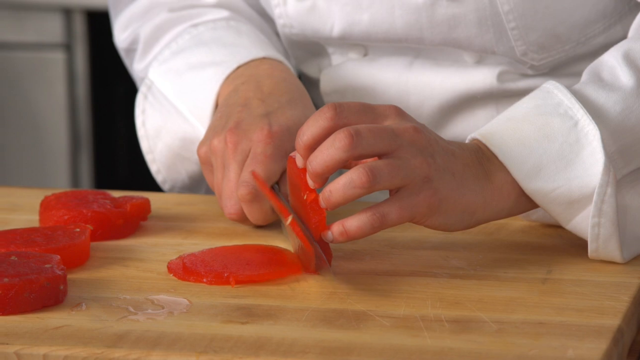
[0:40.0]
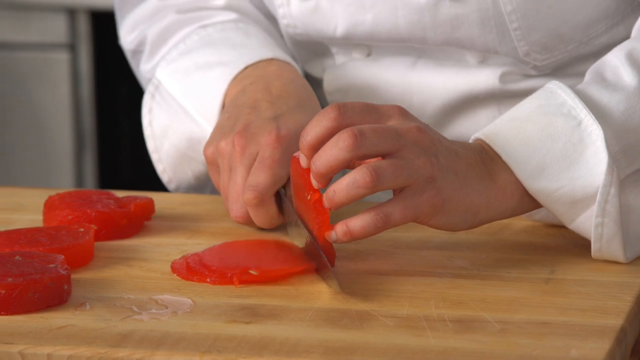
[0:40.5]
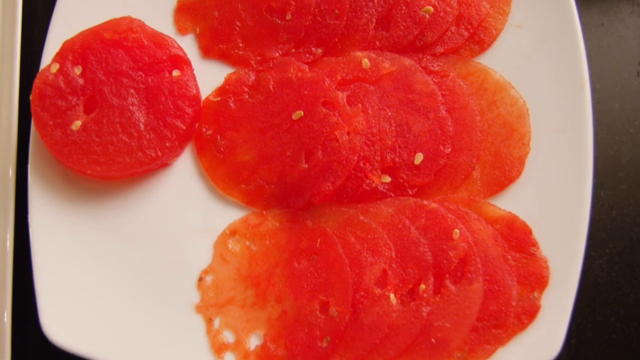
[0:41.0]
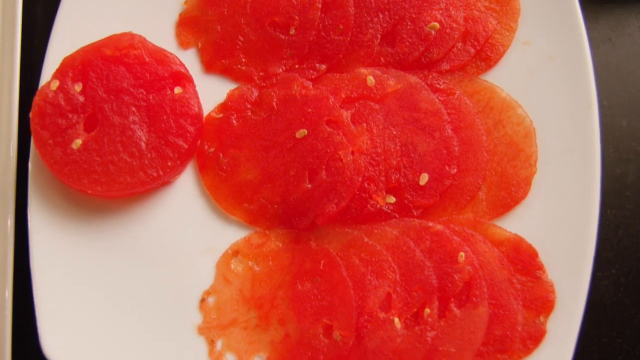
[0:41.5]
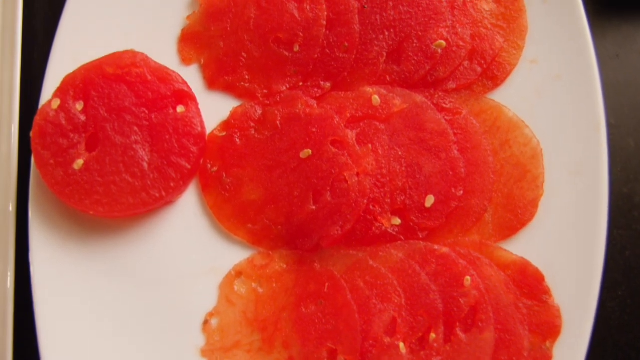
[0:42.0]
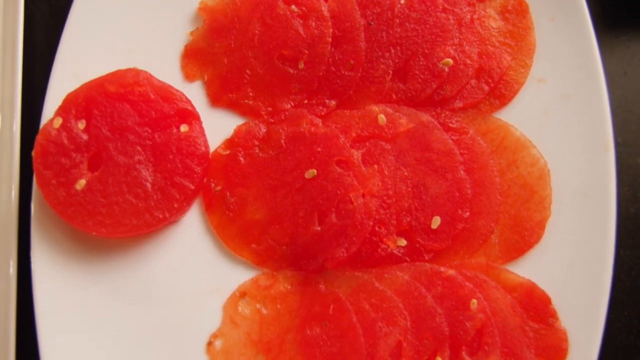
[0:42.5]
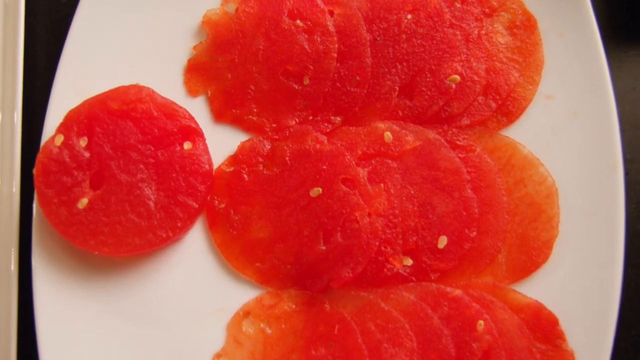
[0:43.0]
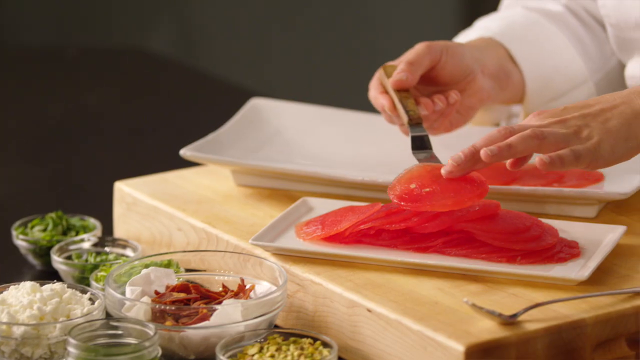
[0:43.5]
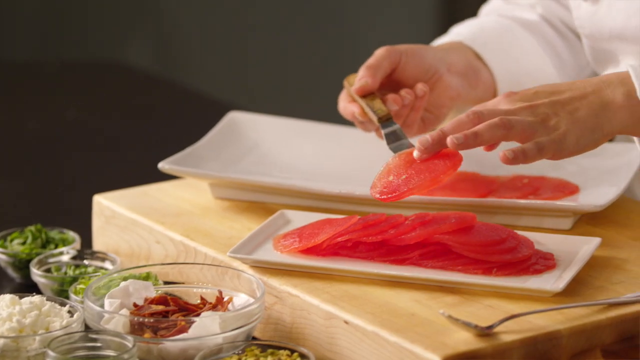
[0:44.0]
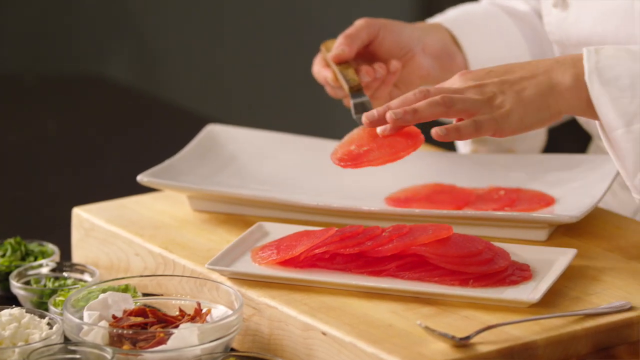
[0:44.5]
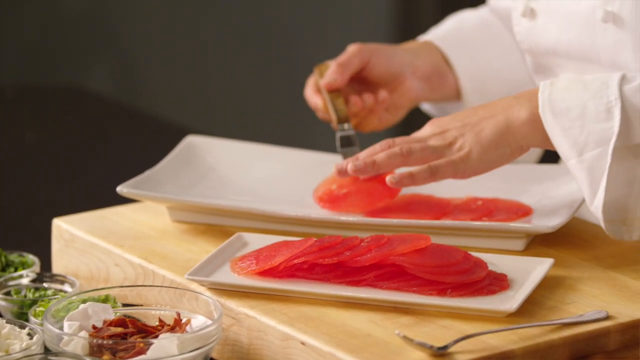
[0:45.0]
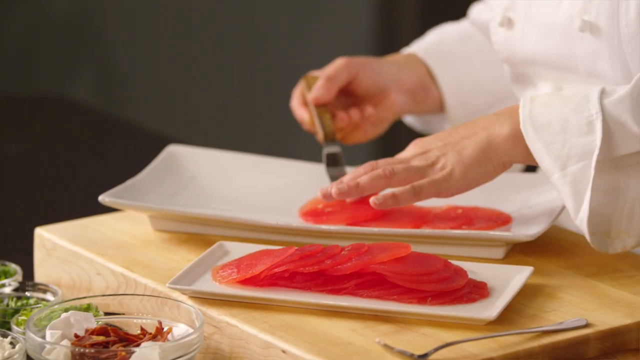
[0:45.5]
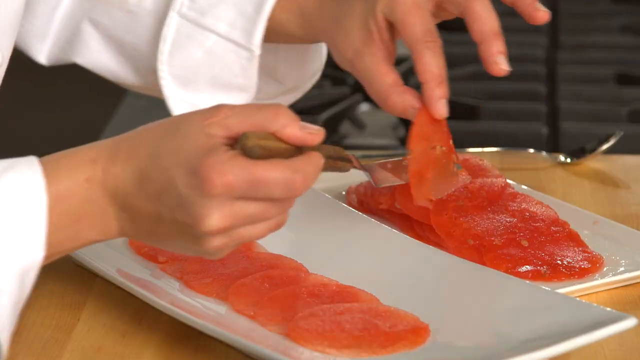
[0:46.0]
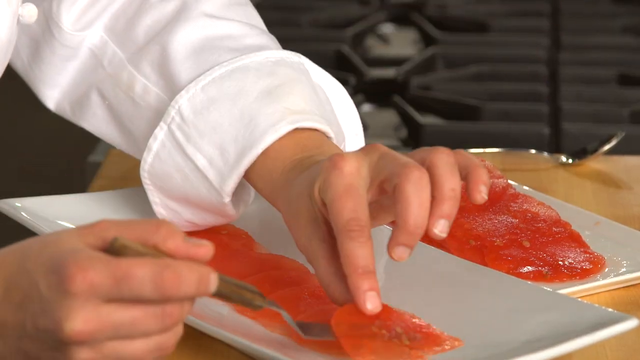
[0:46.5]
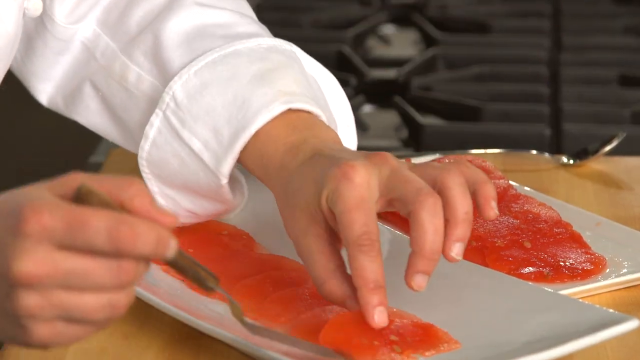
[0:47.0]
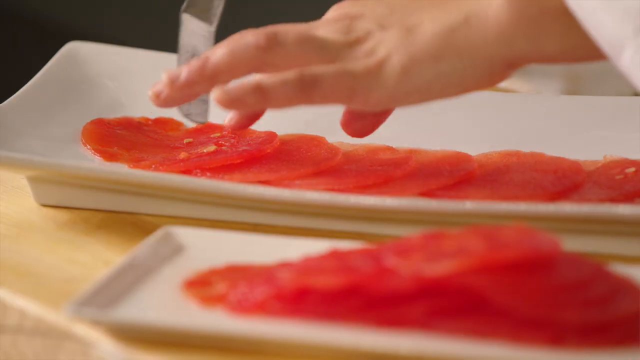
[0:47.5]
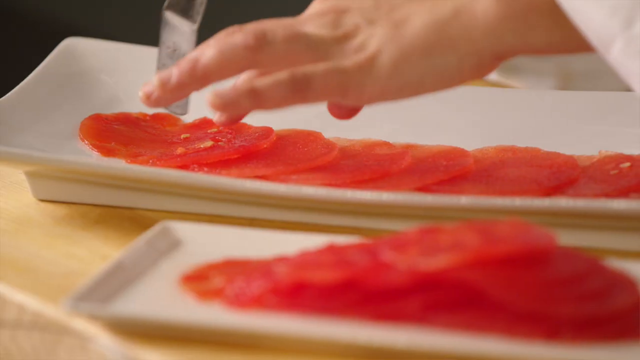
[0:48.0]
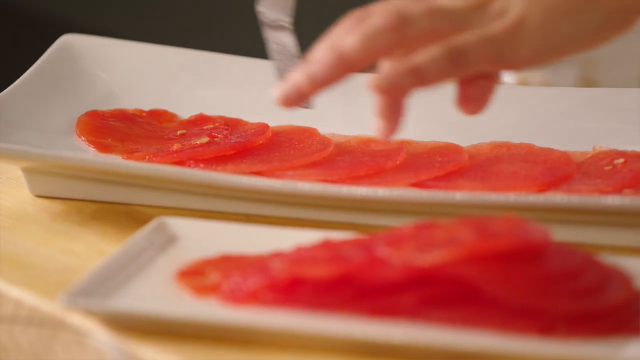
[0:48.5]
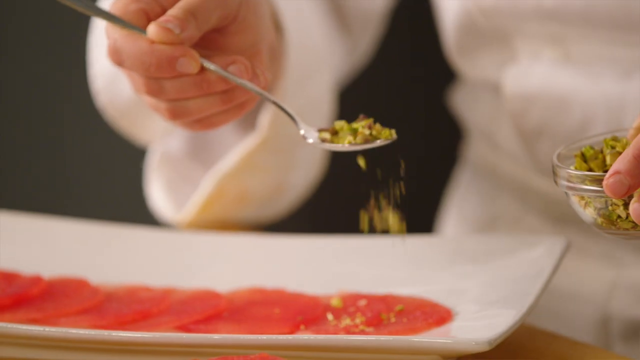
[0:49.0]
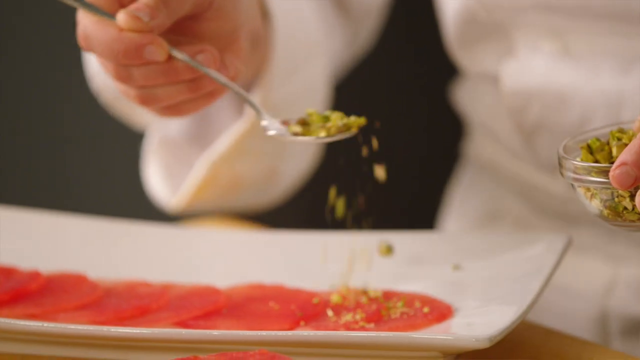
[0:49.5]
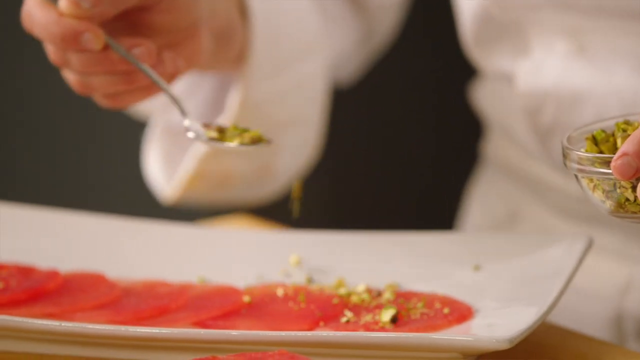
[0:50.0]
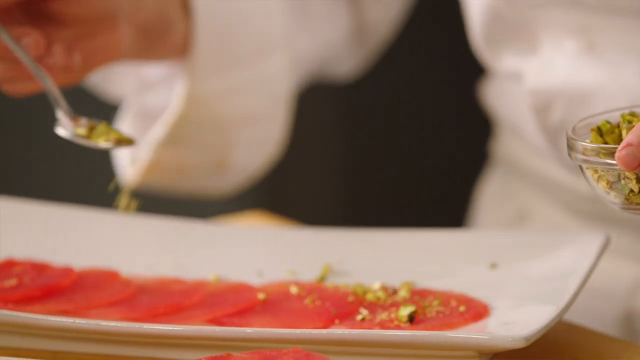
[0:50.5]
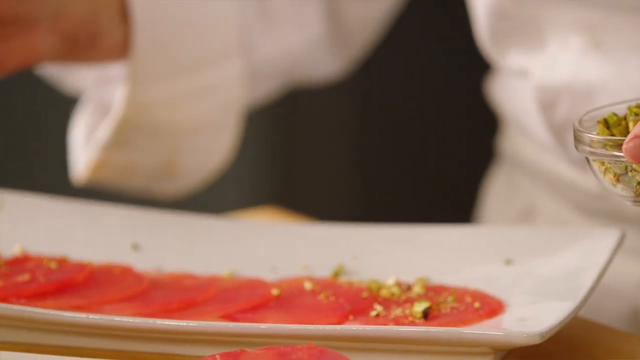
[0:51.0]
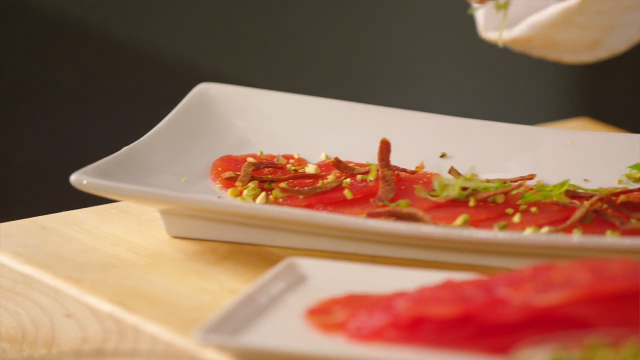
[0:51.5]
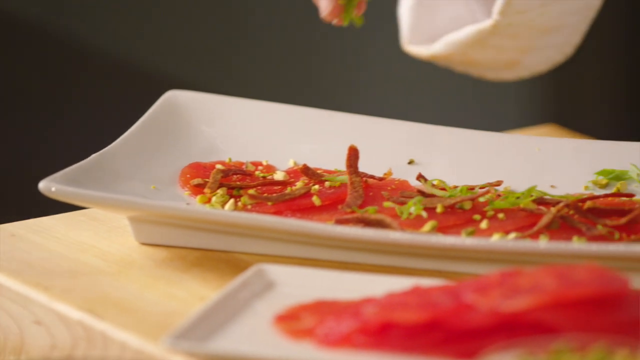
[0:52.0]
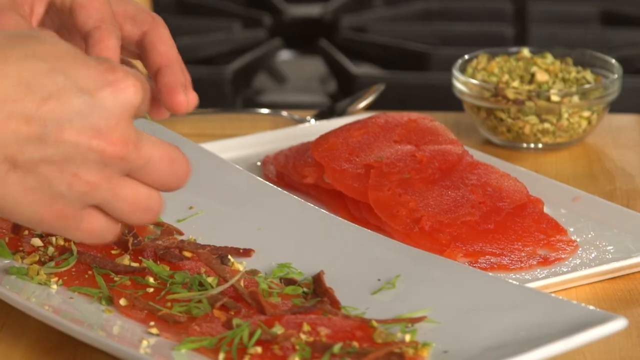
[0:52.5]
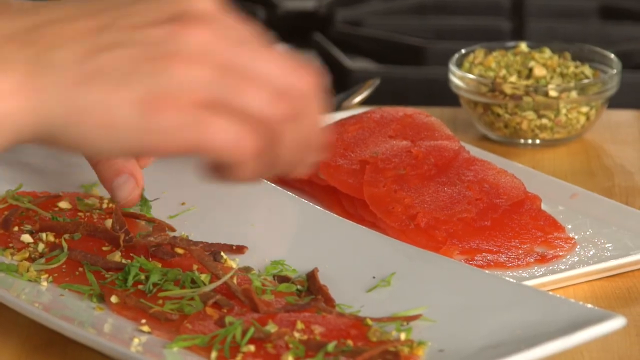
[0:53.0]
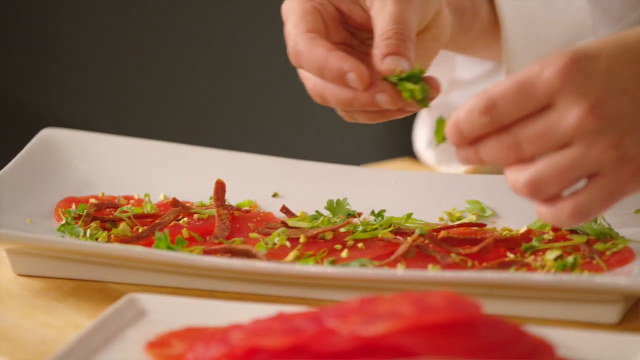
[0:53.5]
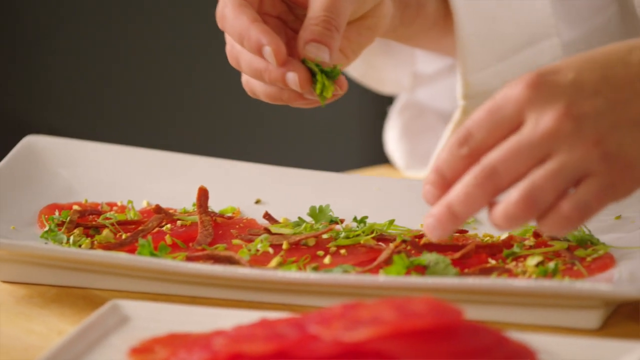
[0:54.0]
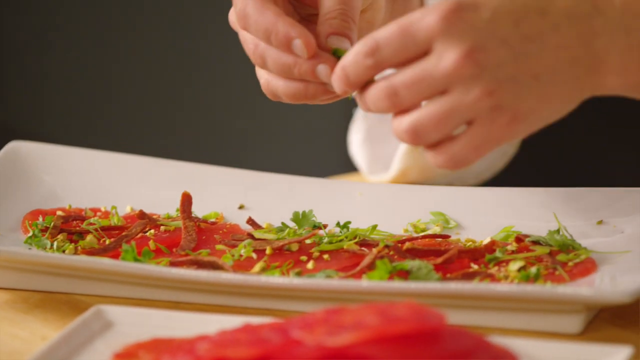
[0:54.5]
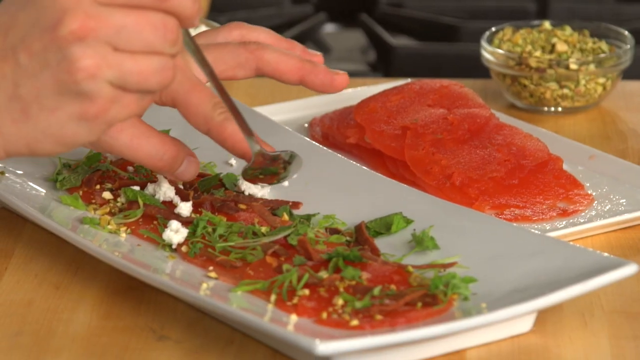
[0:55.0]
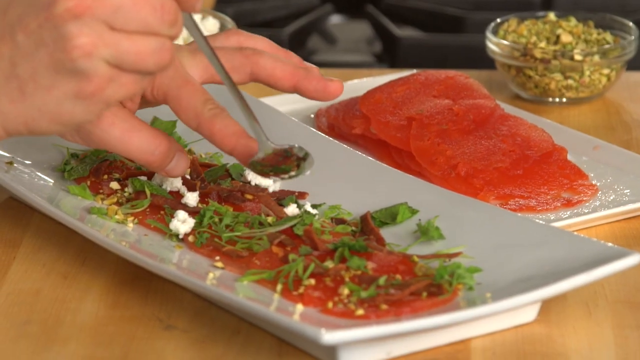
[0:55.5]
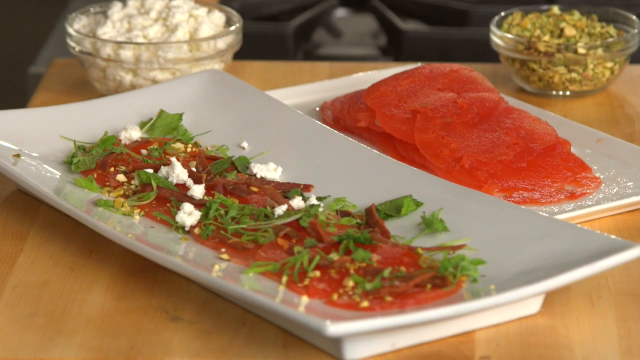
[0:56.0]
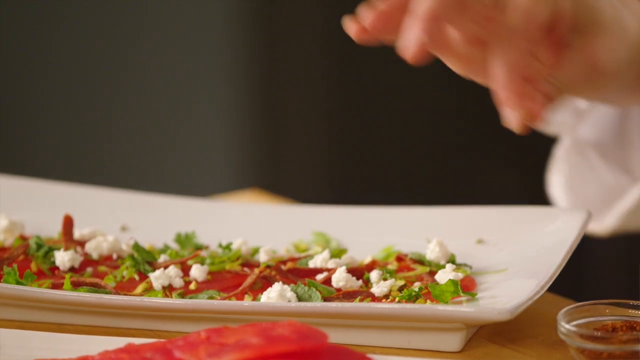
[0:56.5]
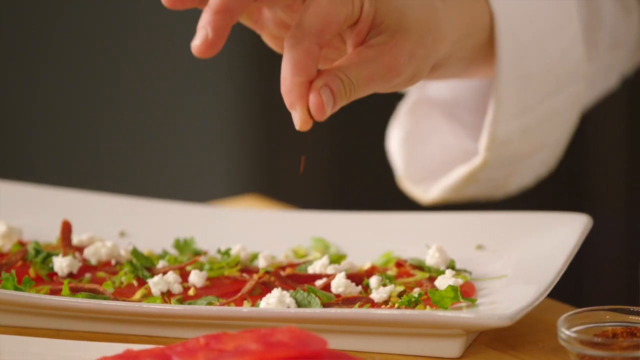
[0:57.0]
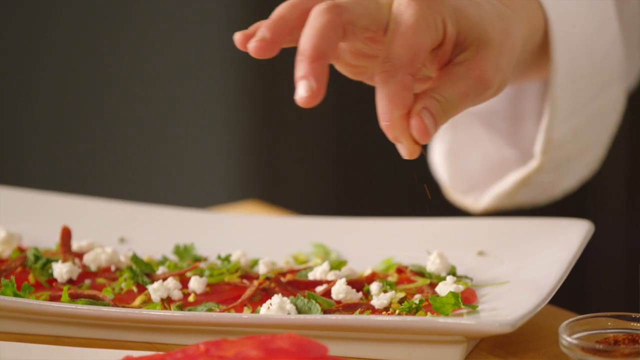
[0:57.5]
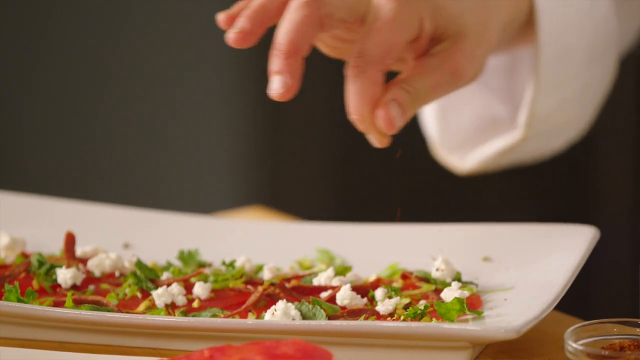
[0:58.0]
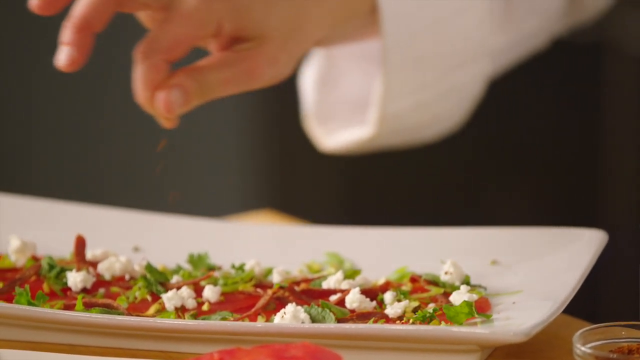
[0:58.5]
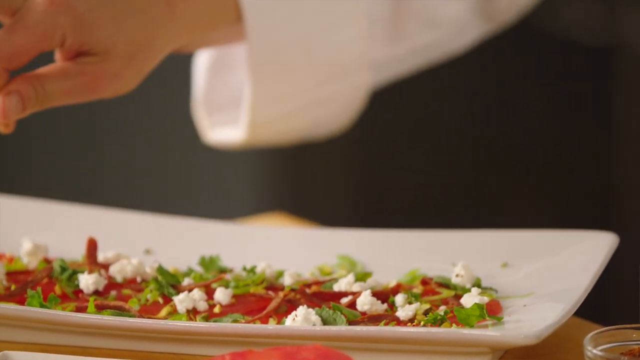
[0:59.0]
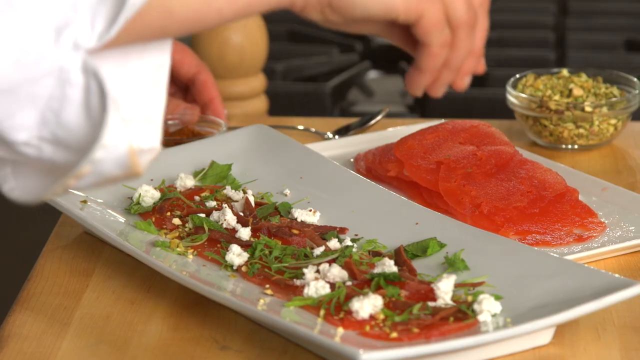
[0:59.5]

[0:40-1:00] The watermelon is already in circles, and she slices it to make it thinner. She has it on a plate that is either white or dark red, then puts it onto a different plate, kind of in a row. She puts some type of green onions on top, then more green stuff, and something that looks like cottage cheese.